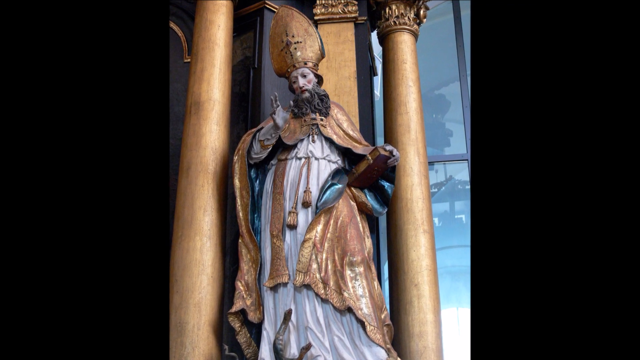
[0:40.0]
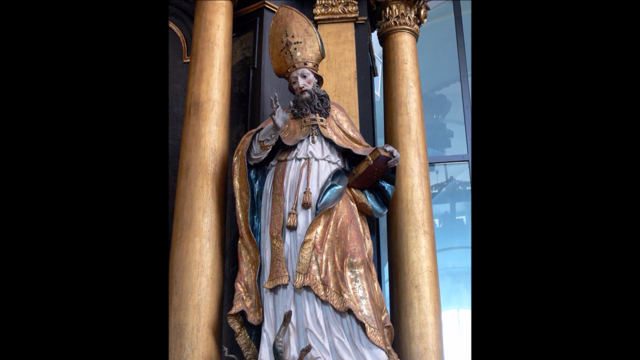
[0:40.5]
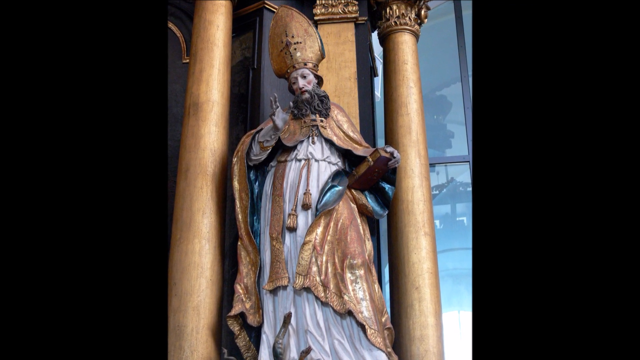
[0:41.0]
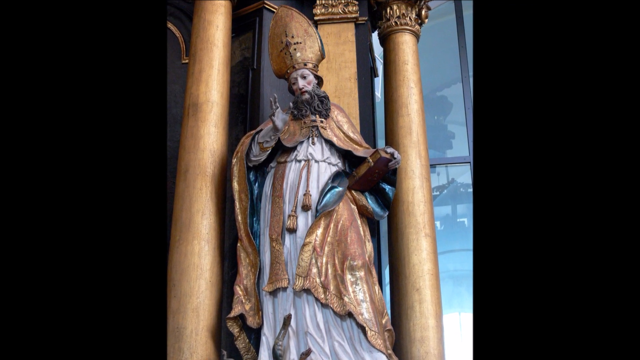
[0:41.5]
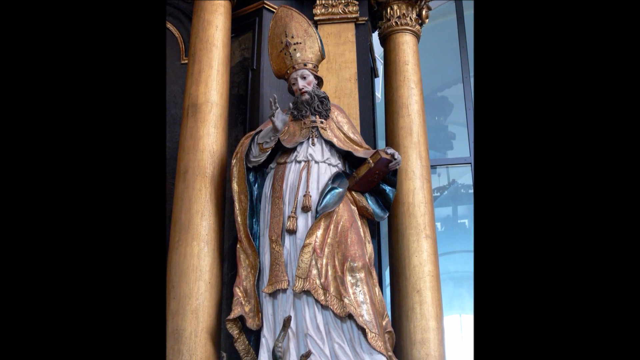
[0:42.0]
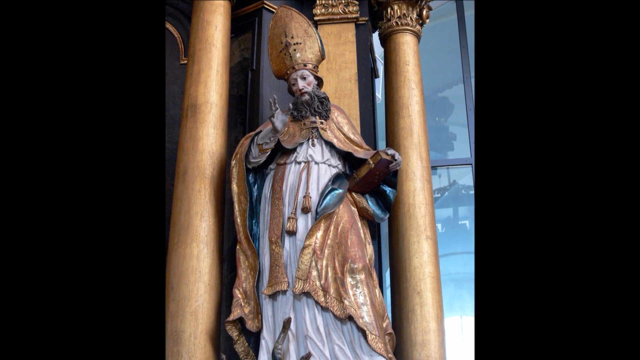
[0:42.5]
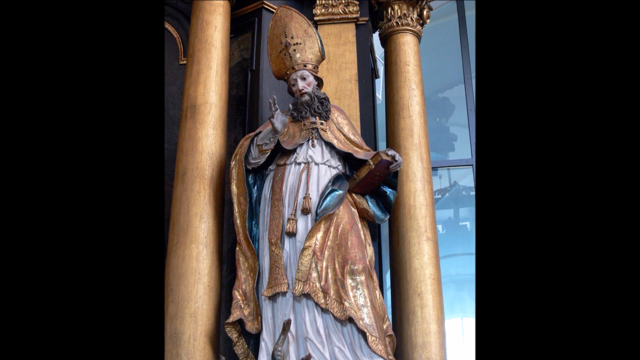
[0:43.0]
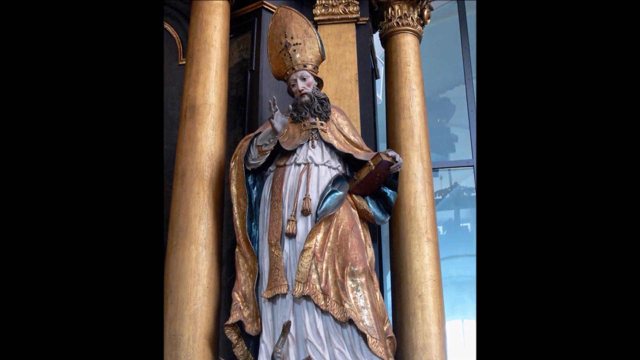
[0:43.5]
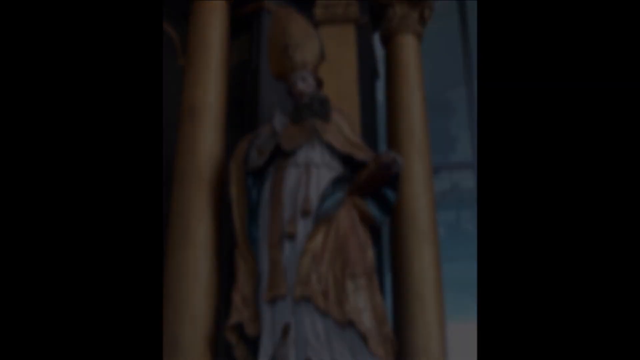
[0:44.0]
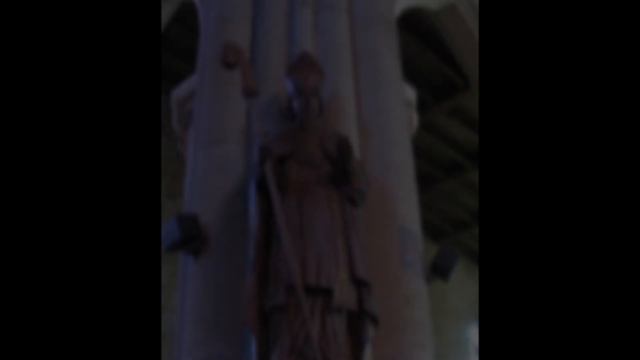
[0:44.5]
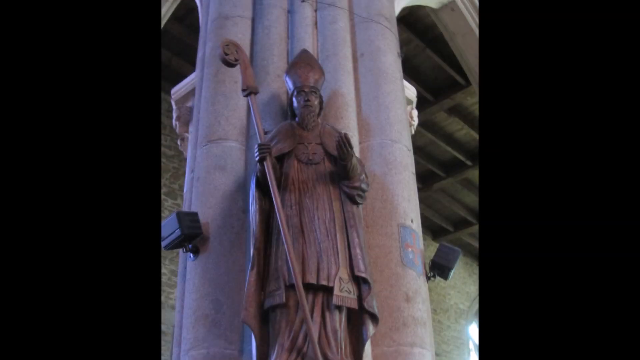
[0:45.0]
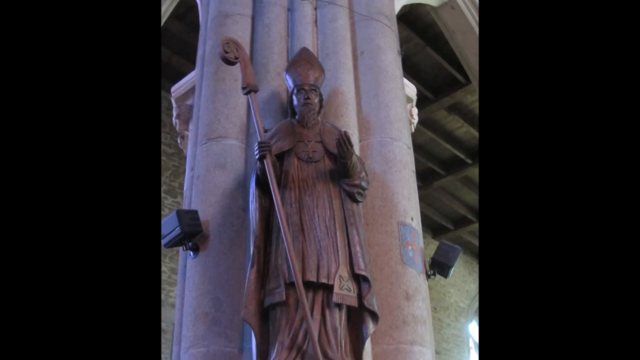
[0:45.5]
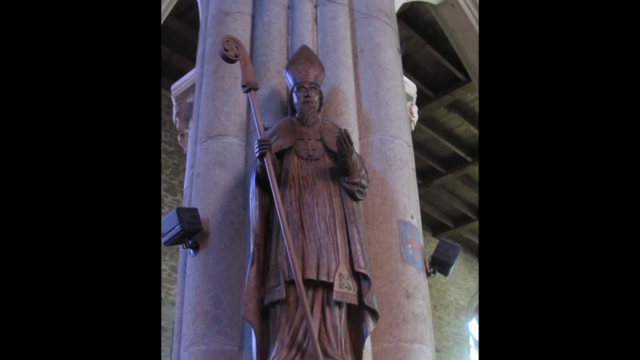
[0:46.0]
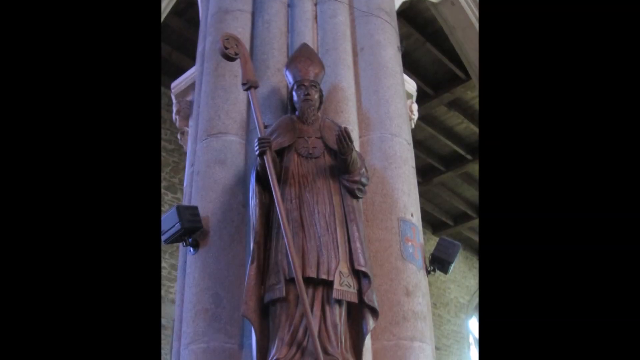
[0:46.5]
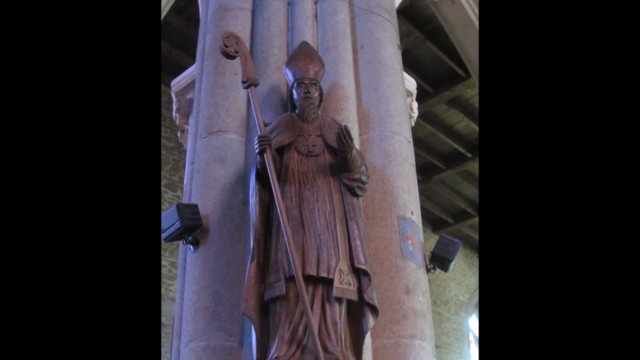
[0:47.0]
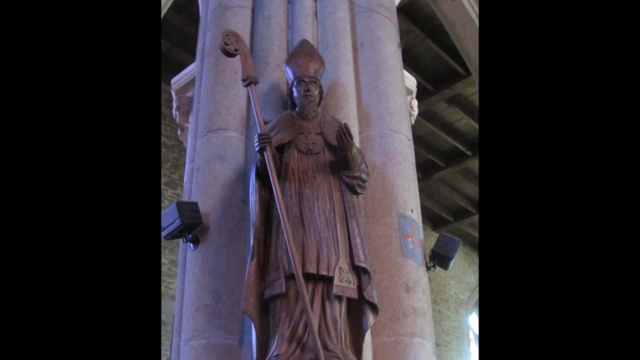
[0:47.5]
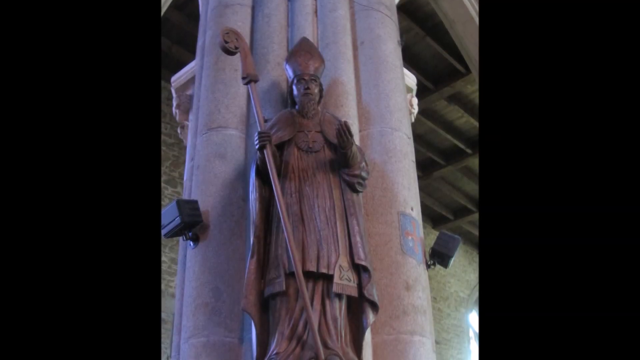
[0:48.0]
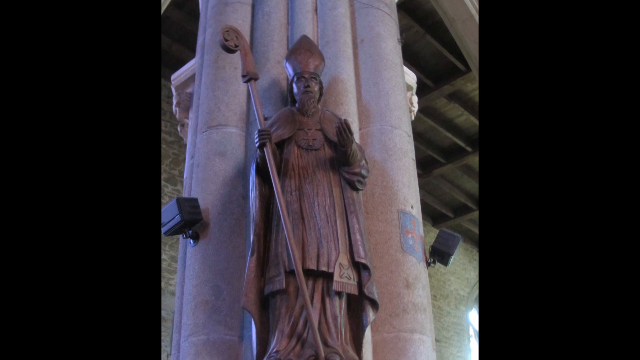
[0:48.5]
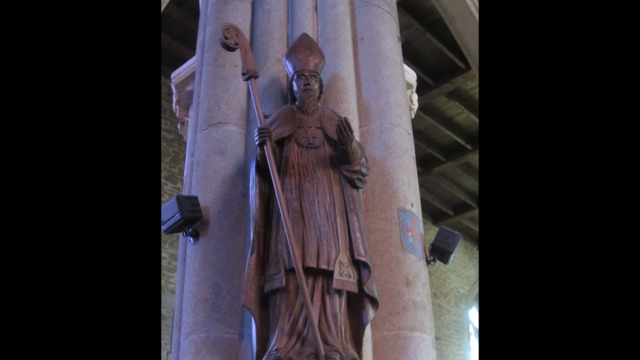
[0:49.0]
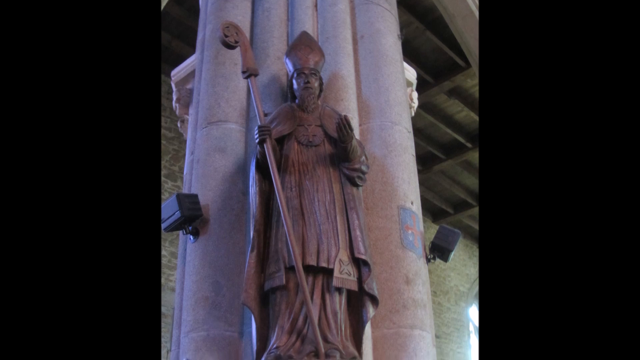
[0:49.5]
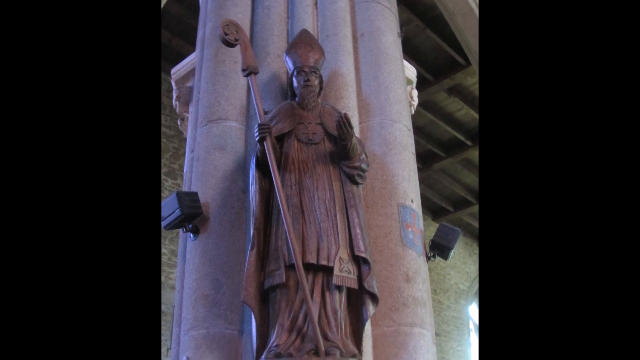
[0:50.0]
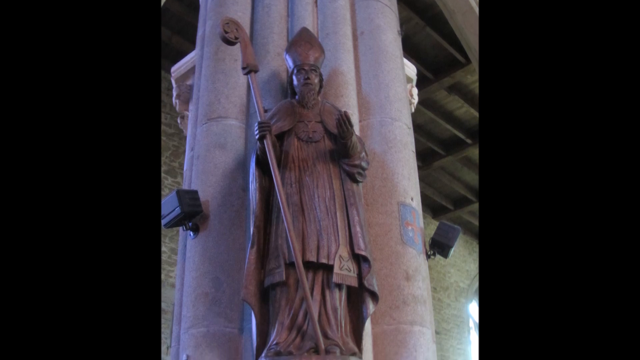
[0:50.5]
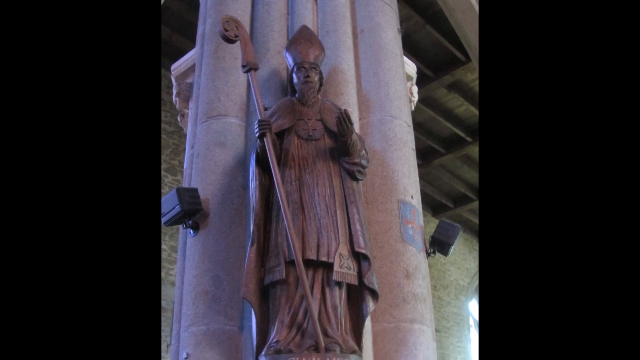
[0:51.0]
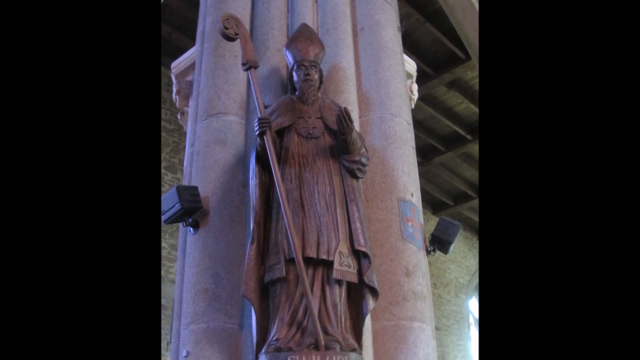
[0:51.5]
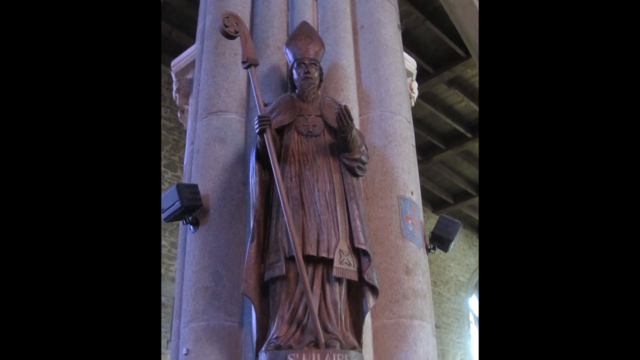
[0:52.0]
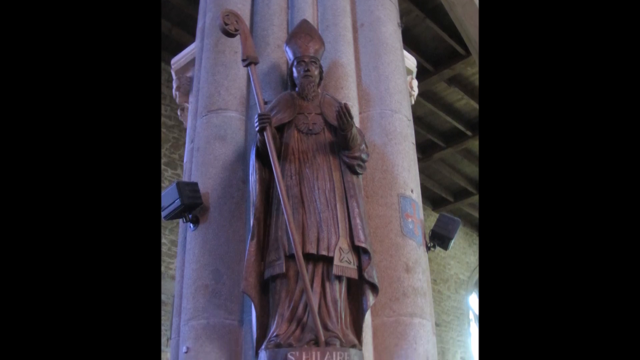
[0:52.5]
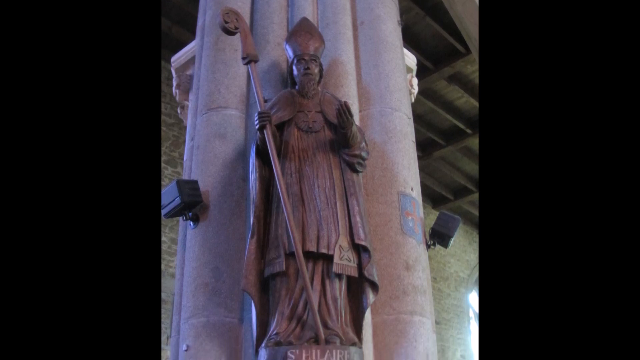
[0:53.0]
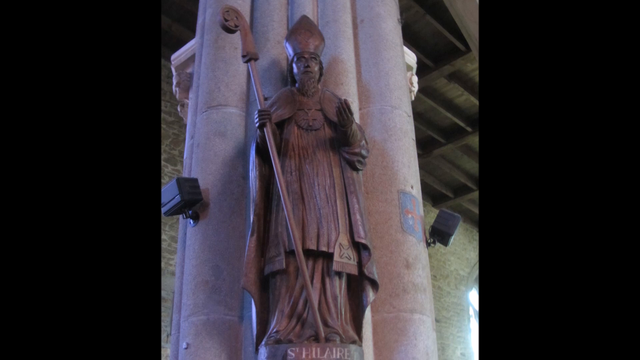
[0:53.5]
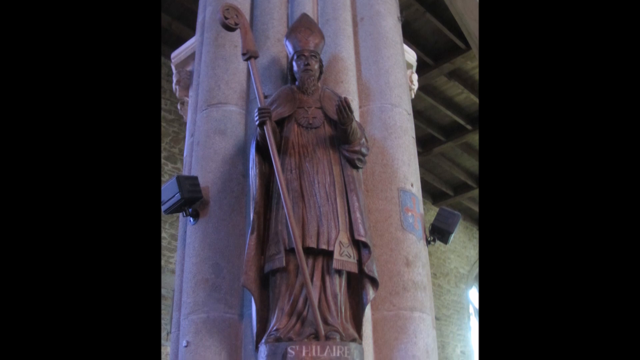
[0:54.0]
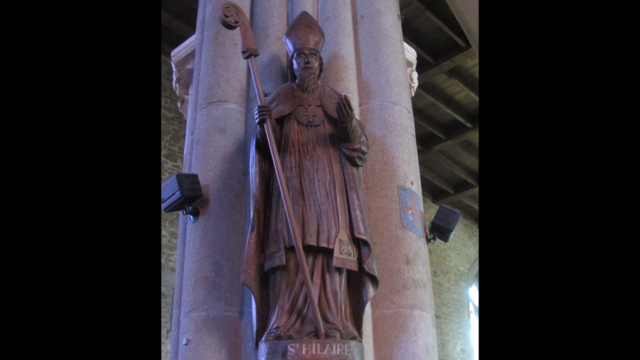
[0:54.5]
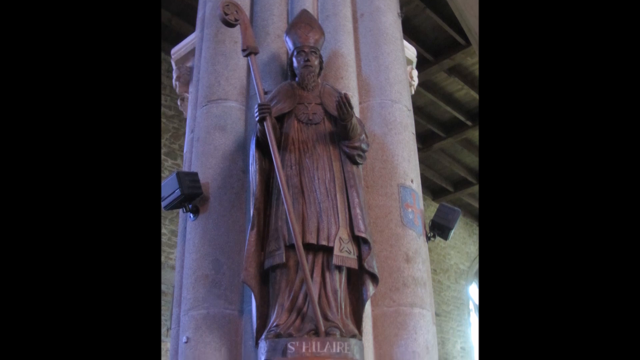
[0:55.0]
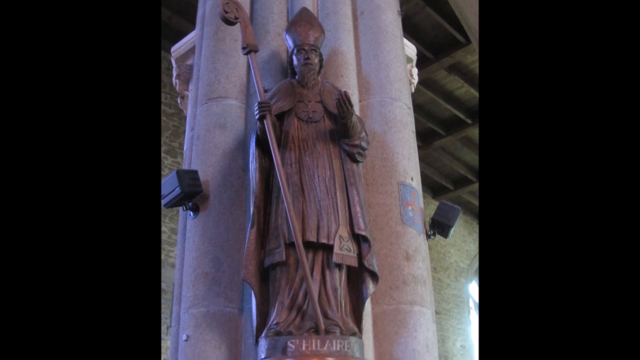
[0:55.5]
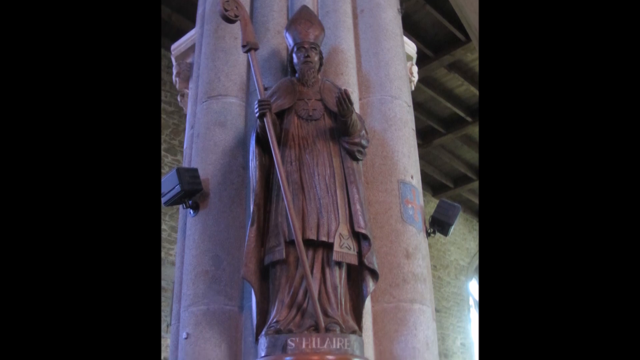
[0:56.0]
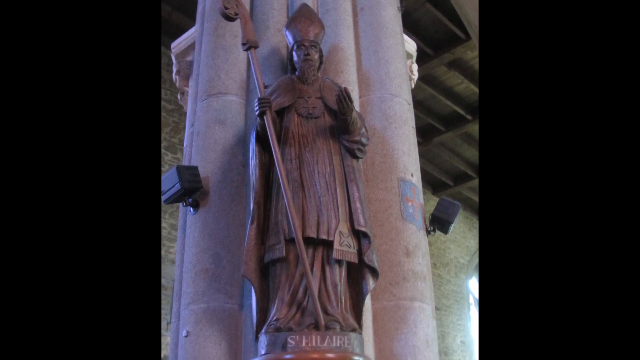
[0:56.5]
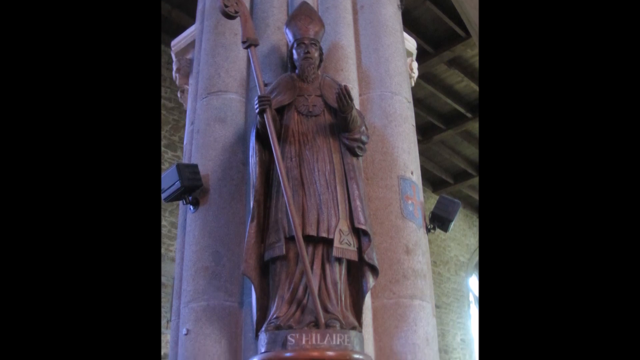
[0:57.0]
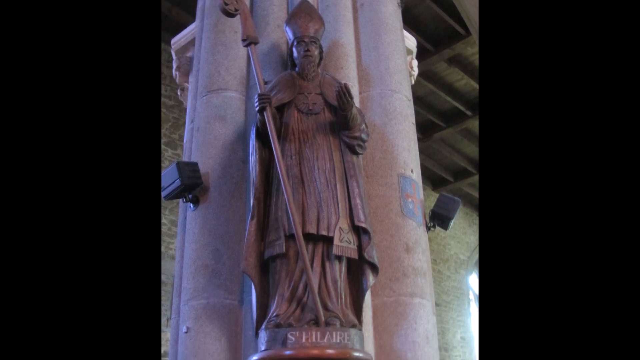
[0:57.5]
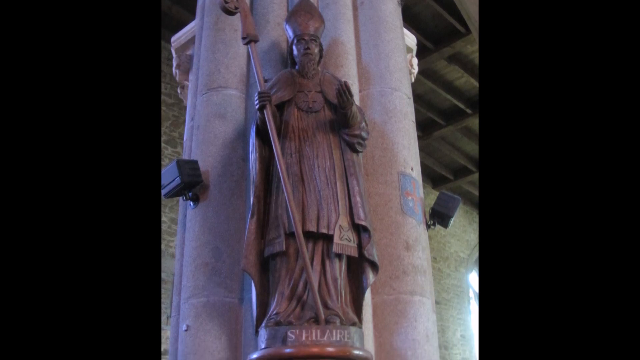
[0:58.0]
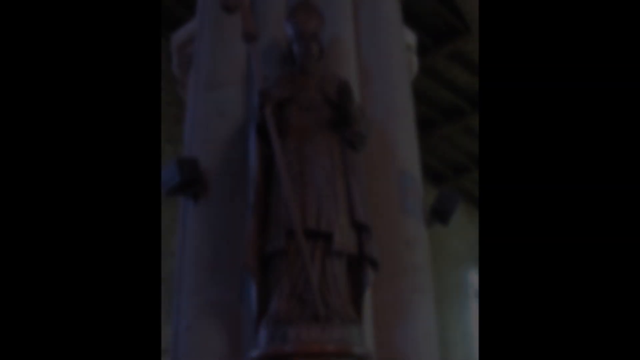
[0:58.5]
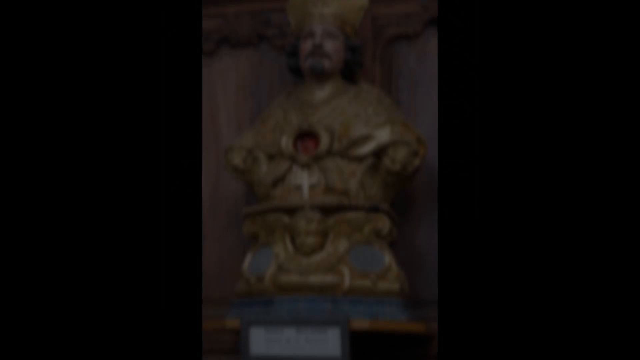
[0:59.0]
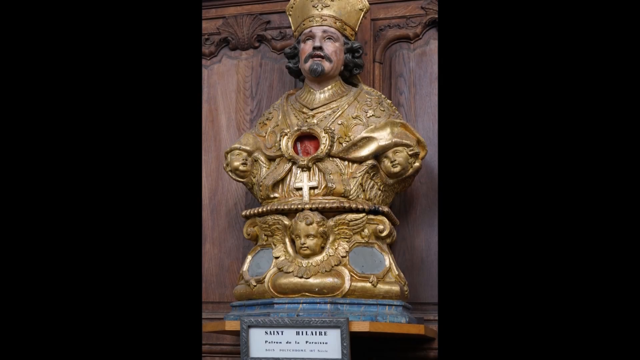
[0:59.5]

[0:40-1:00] The statue, possibly of St. Hillary, is seen closer up. The gold covering seems to have some kind of attachment, not like a zipper, that keeps it around his body. He has grayish, darkish hair, a long beard and a mustache, and looks like he has blush on. Next another statue appears, again with the camera looking upward, possibly in a church; two speaker systems are visible. This statue looks like it is maybe made of wood. In his right hand he holds a staff, and his left hand is out a little. He seems to be looking up and has the same hat as the previous statue, with a more brownish robe and covering. Text higher up apparently reads "St. Hillary." Then a still color picture appears with the text "St. Hillary." It shows a gold statue of a man with long curly hair, a mustache and kind of a goatee, wearing a gold rounded hat. His hands cannot be seen; where his arms should be there appear to be angel faces. In the middle of his chest is a red circle, with a crucifix underneath it. At his waistline there is some decoration that looks like it could be a belt, and there is another angel with wings.